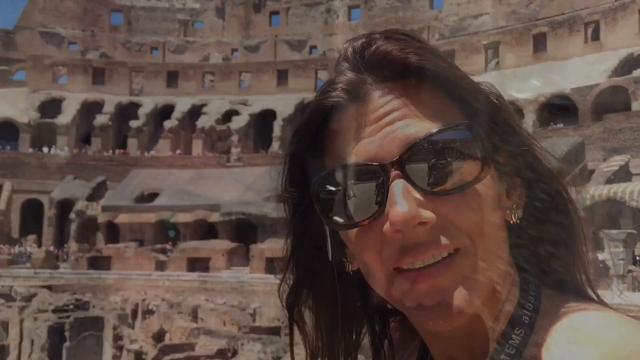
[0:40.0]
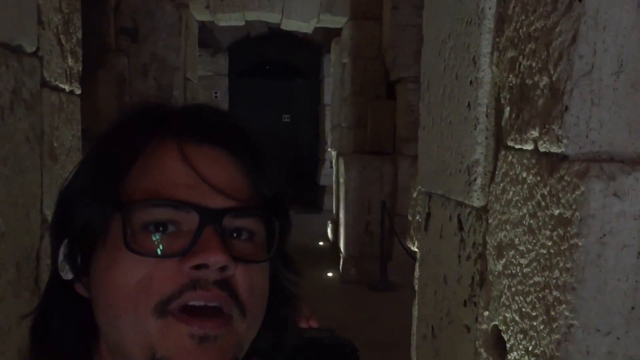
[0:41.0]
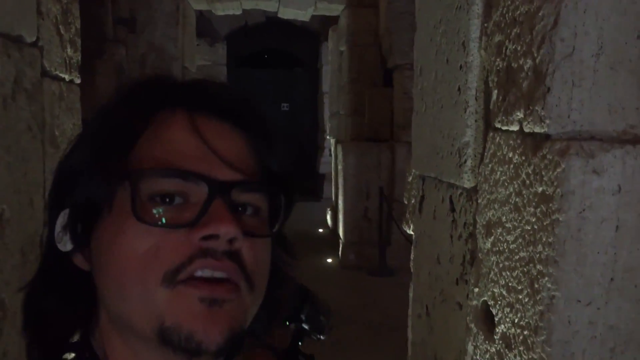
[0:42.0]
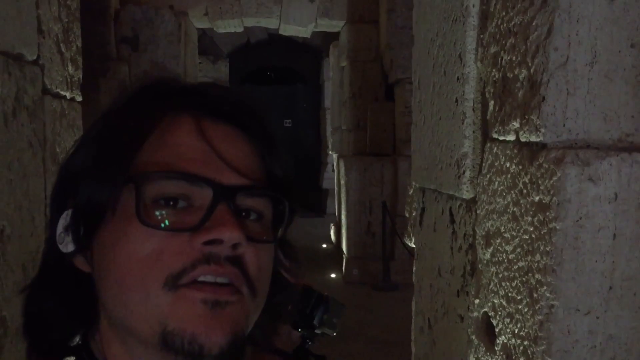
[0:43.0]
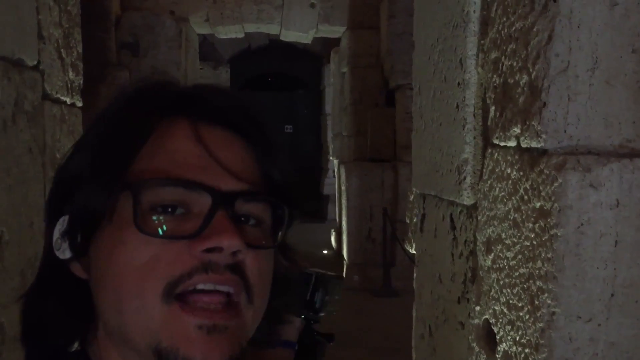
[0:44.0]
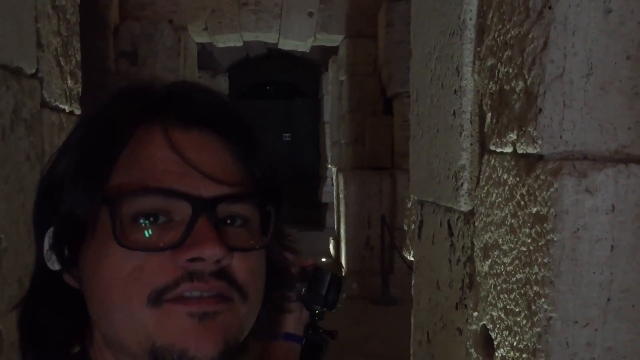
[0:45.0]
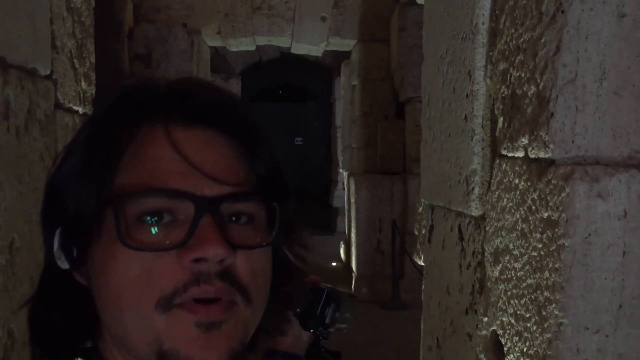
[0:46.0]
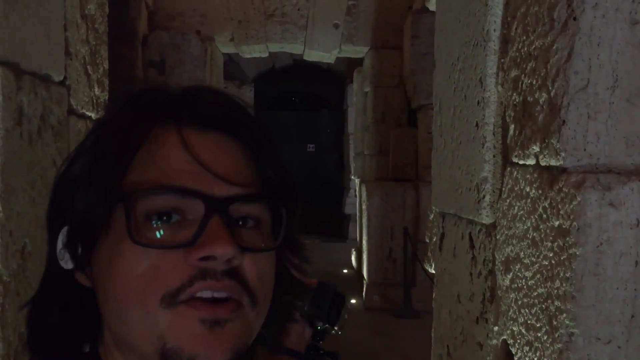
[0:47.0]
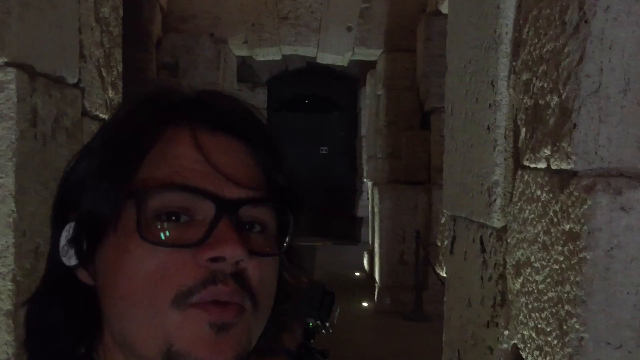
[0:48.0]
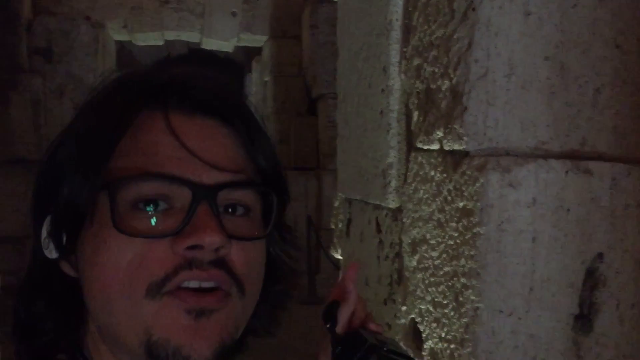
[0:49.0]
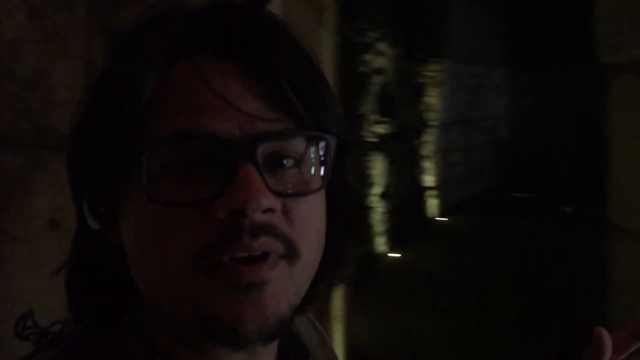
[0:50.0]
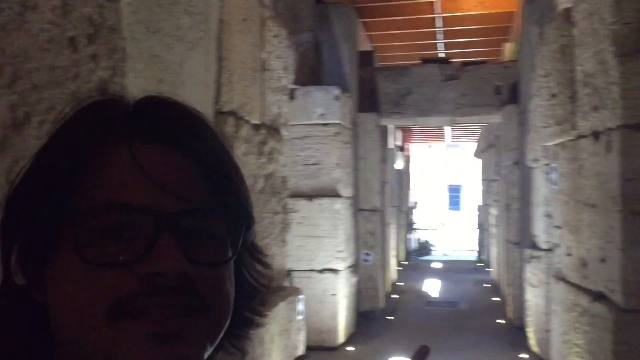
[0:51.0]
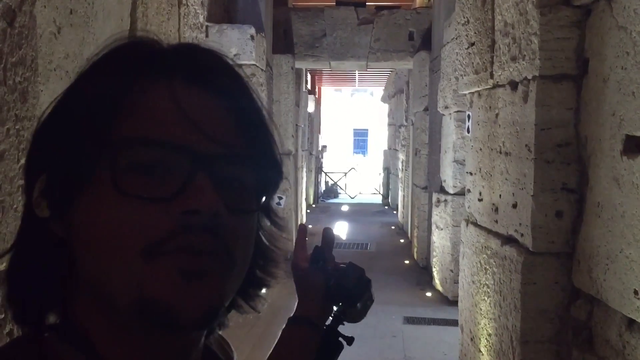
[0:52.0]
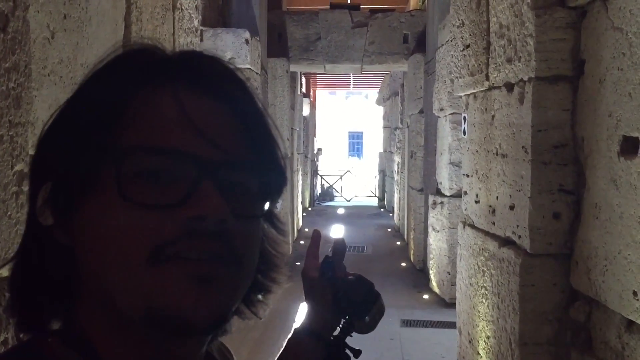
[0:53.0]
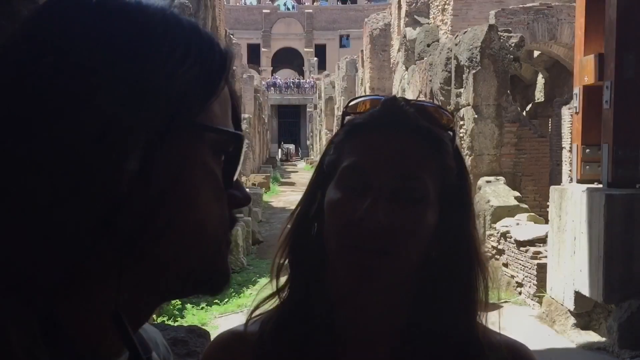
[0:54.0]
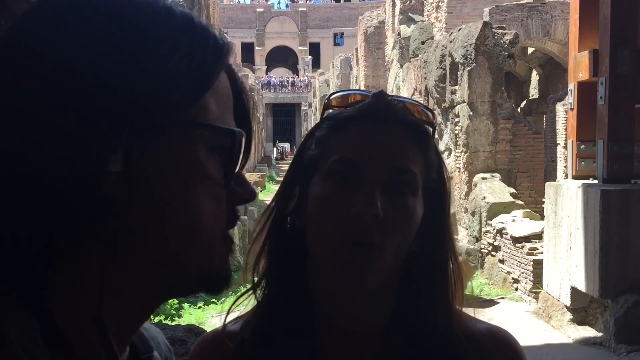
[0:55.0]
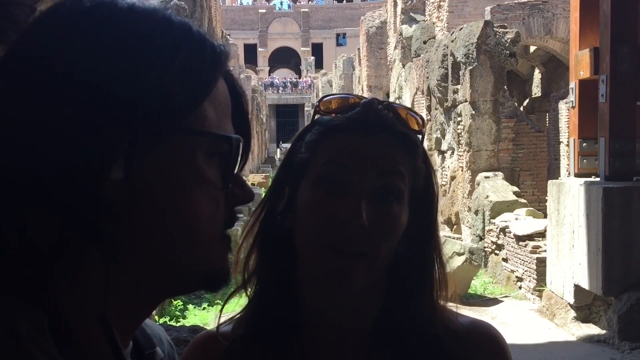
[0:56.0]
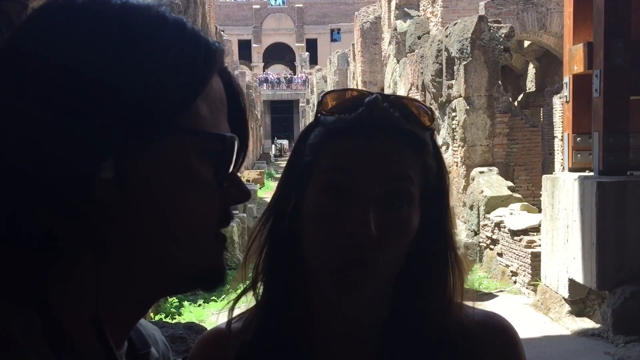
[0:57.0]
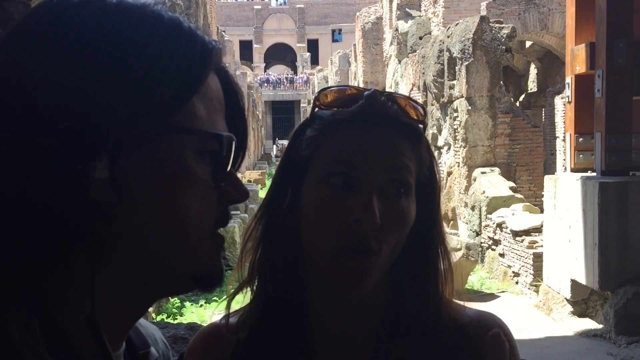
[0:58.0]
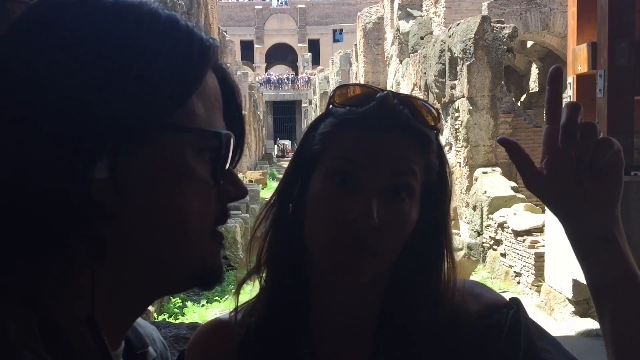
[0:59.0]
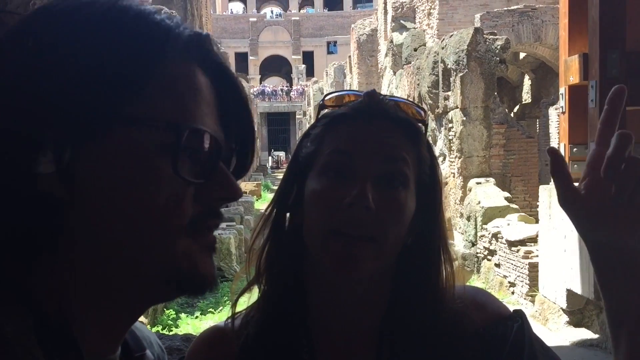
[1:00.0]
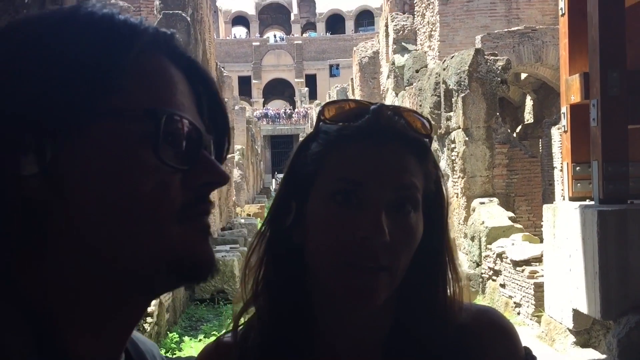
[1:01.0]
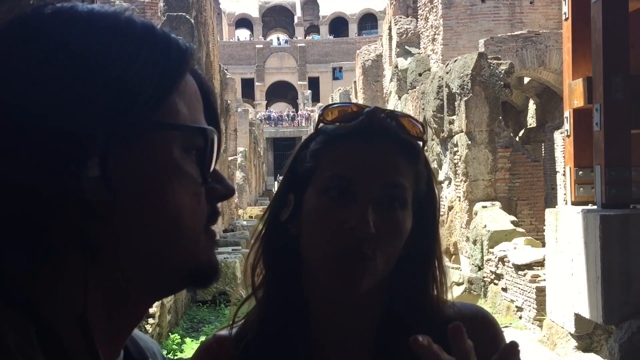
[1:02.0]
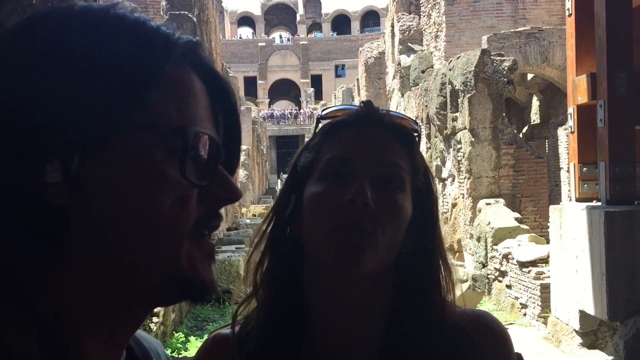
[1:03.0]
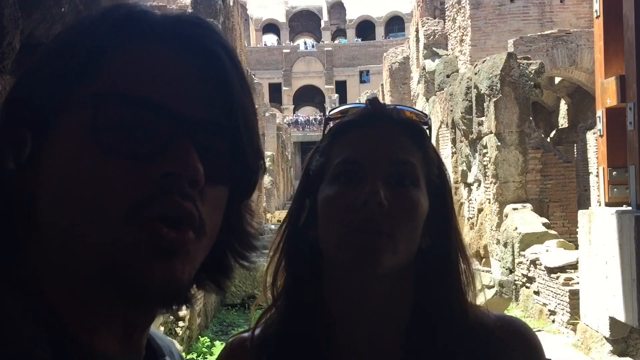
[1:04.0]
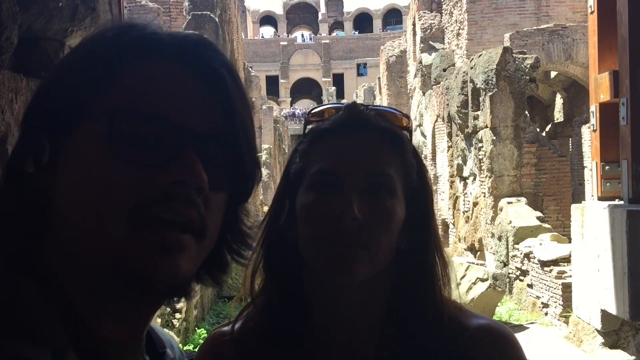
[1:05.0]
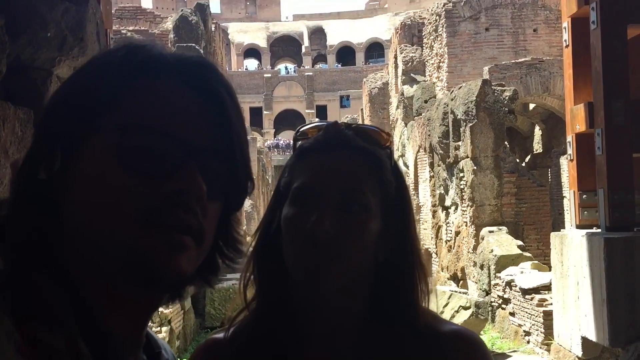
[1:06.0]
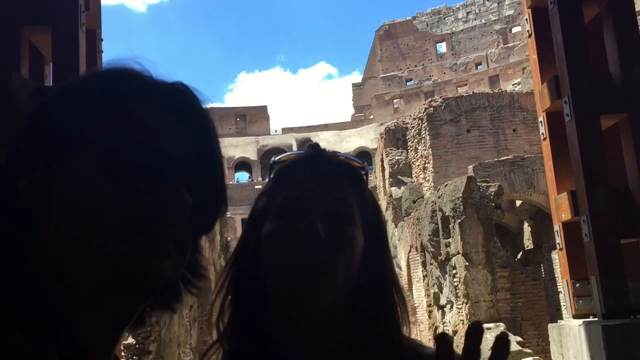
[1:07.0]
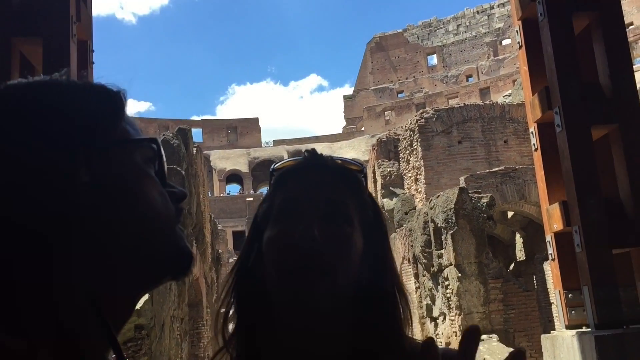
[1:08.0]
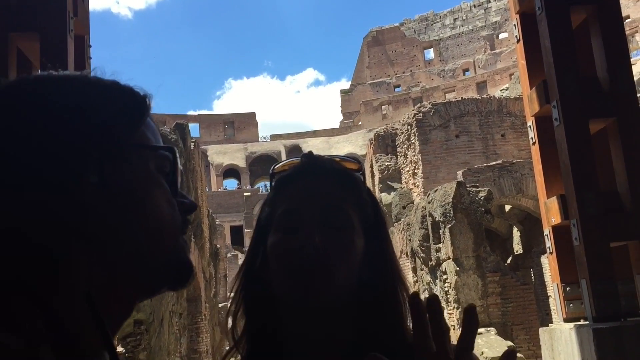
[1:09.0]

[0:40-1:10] Inside the Roman Colosseum, a woman looks at the camera with the Colosseum behind her. This fades to a man standing in a dark area with stone walls on either side of him, which looks like a stone passageway. He looks up at the camera and speaks, then turns to show a different passageway with sunlight at its end, pointing down toward the opening. Next the same man and the woman are seen standing on the ground of the Colosseum, surrounded by stone walls. They are shrouded in shadow, so their faces are a bit obscured, but she is speaking to the camera and gesturing, pointing up toward the Colosseum. The man occasionally turns to look at the camera and says a few words as the woman continues to speak, and then the camera pans up to show the upper edges of the Colosseum walls and the sky beyond.